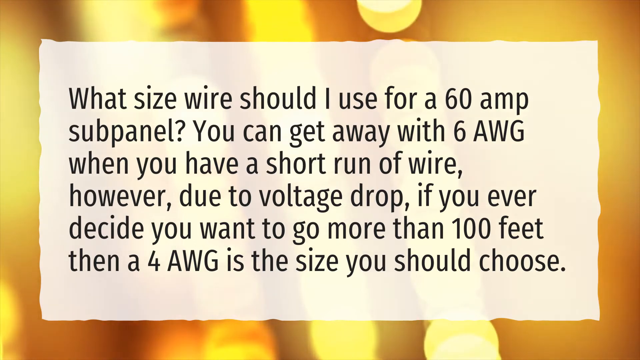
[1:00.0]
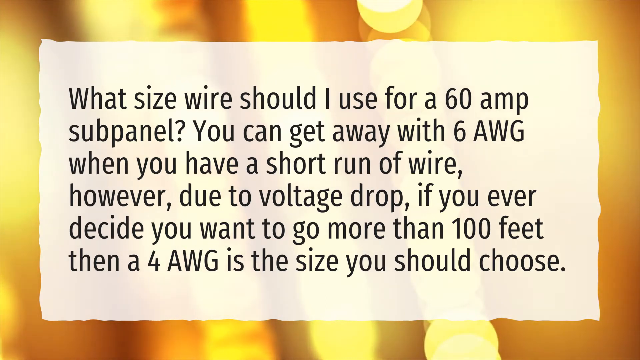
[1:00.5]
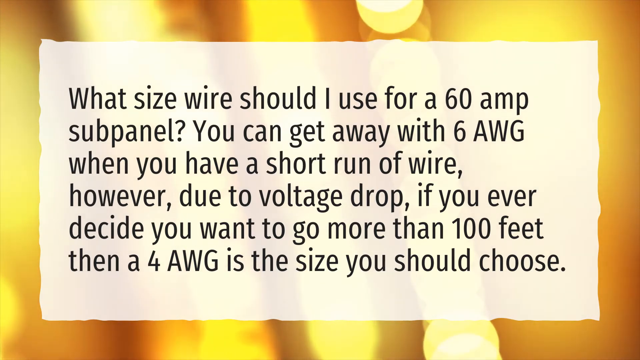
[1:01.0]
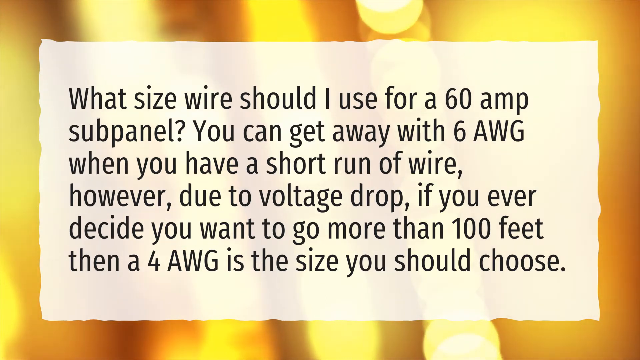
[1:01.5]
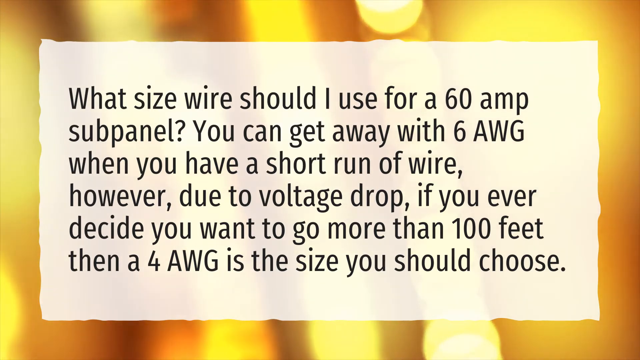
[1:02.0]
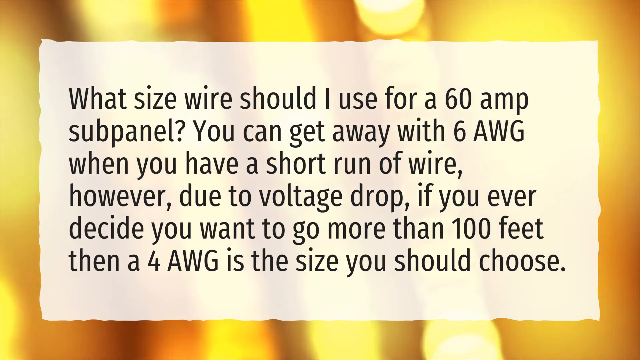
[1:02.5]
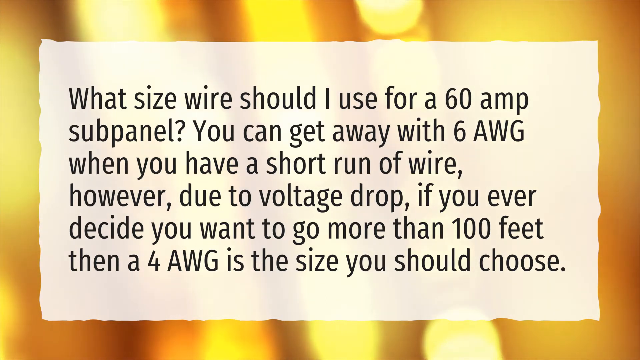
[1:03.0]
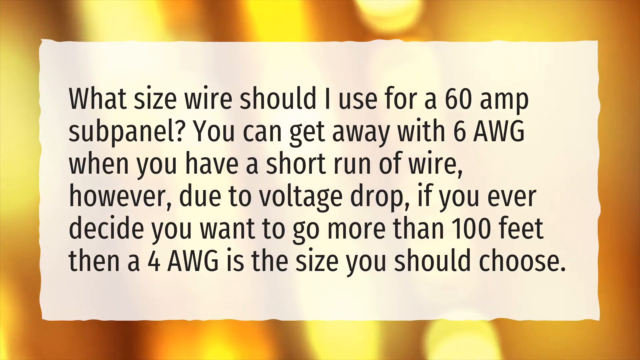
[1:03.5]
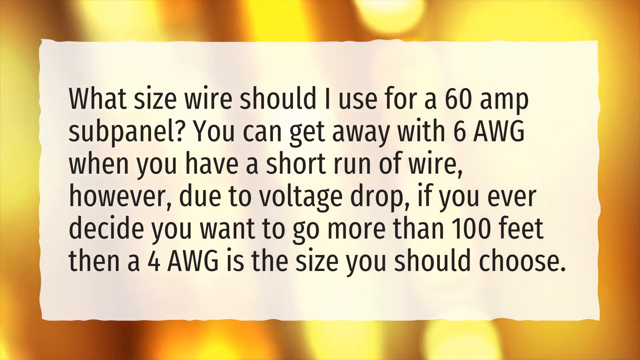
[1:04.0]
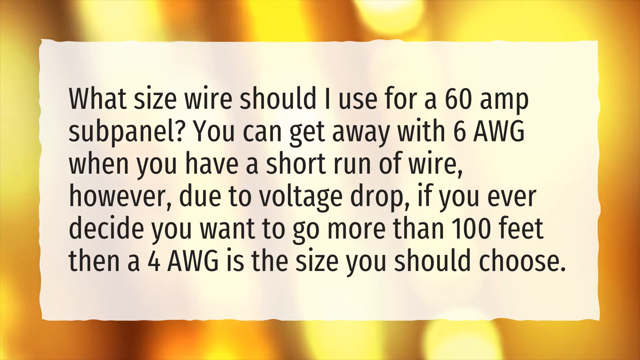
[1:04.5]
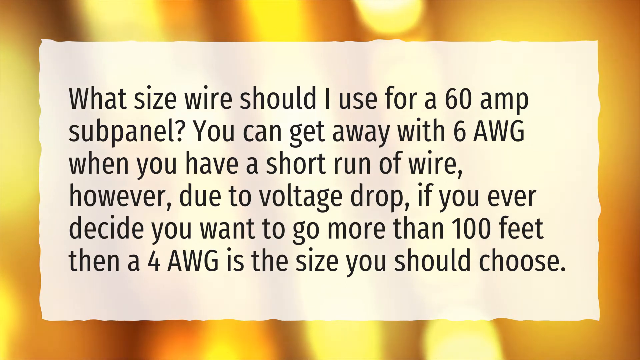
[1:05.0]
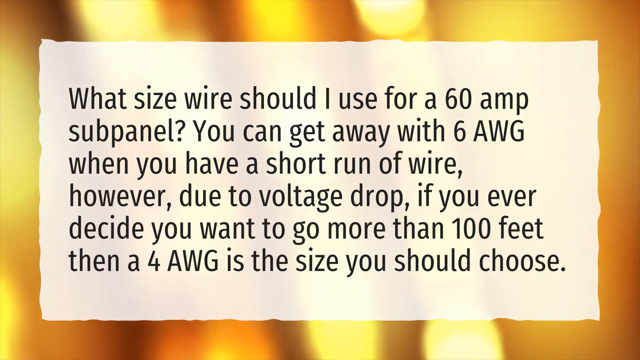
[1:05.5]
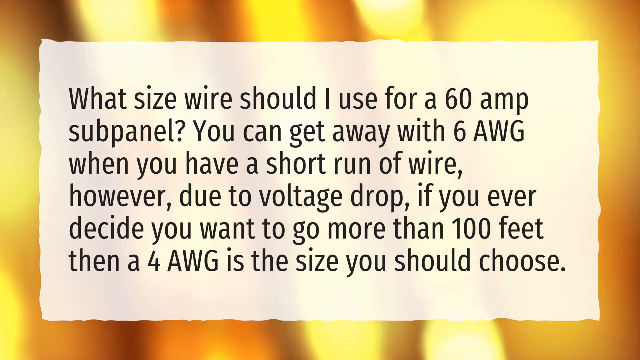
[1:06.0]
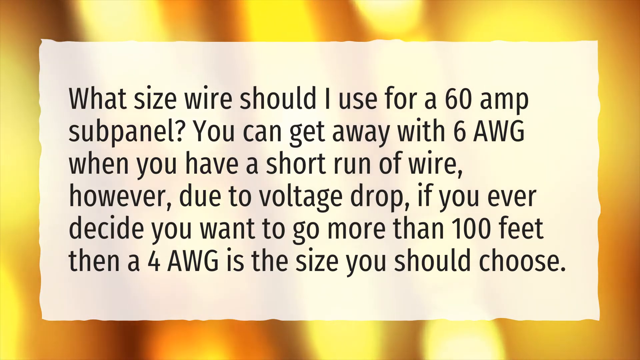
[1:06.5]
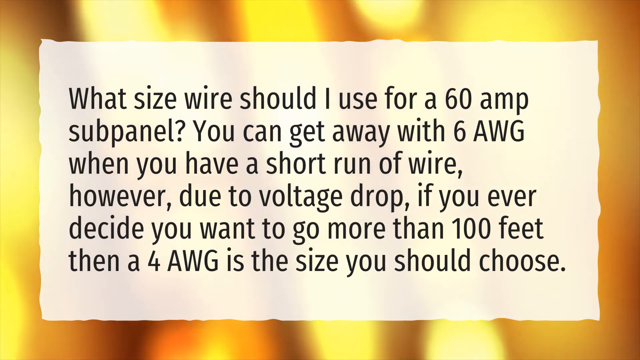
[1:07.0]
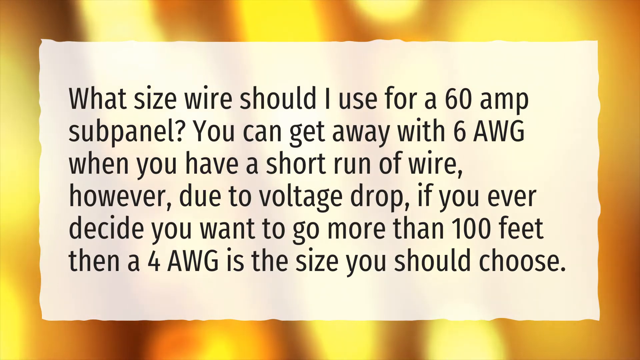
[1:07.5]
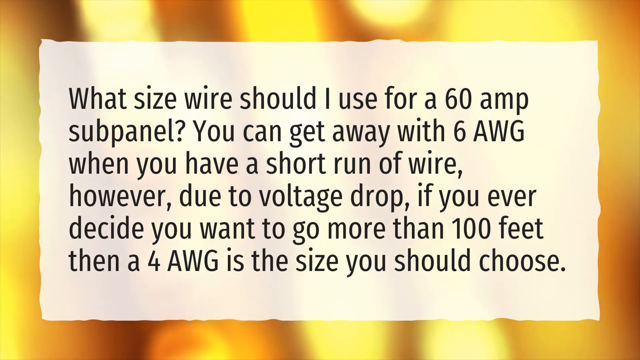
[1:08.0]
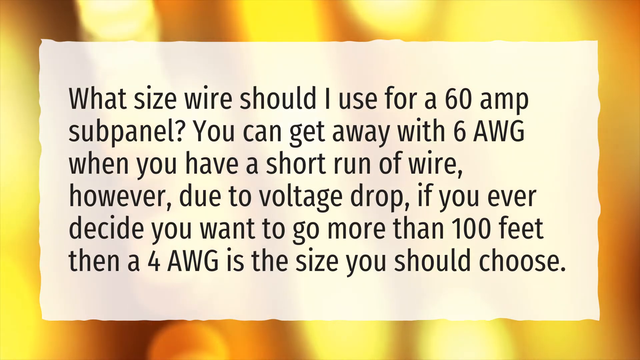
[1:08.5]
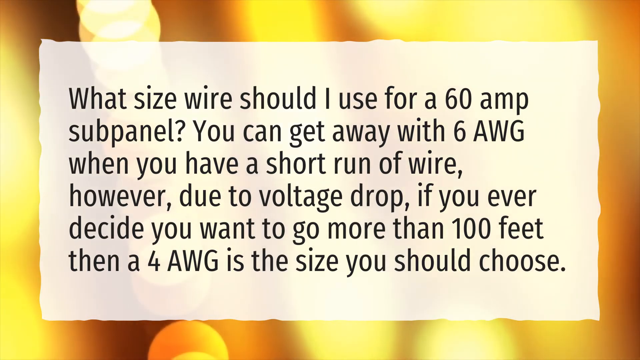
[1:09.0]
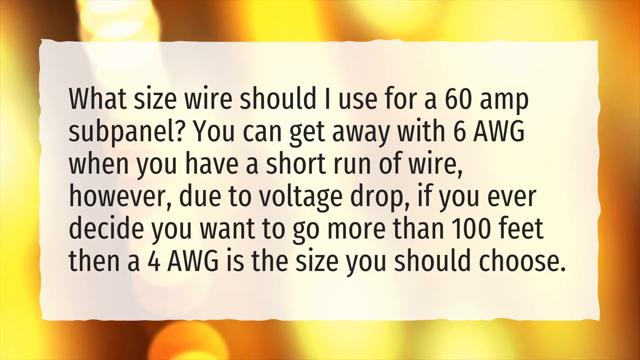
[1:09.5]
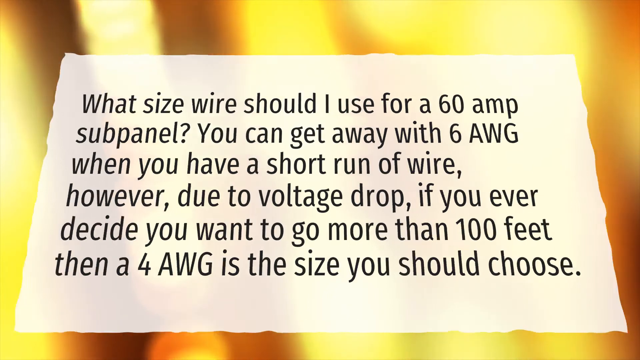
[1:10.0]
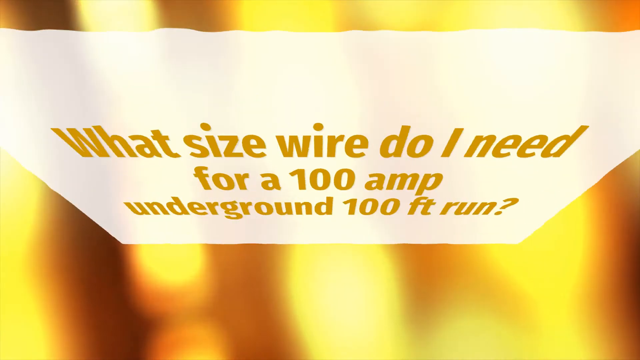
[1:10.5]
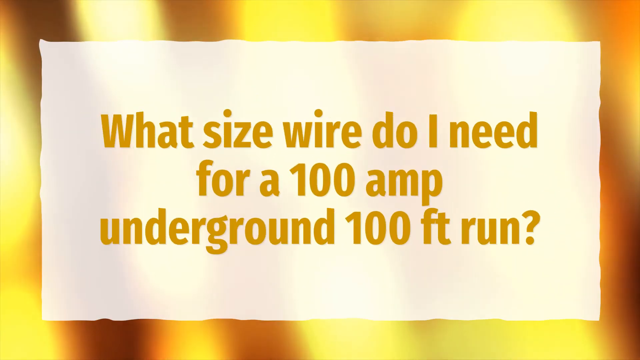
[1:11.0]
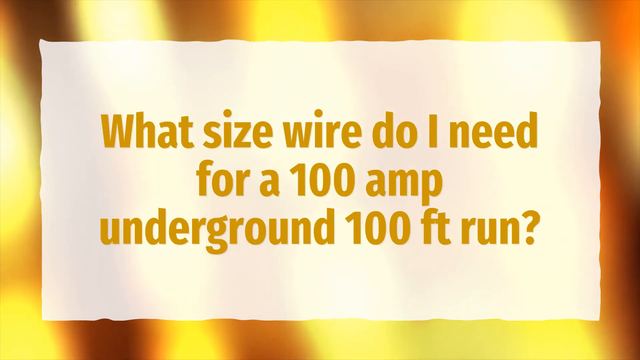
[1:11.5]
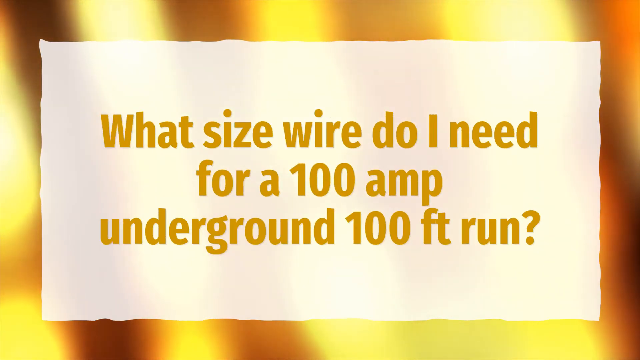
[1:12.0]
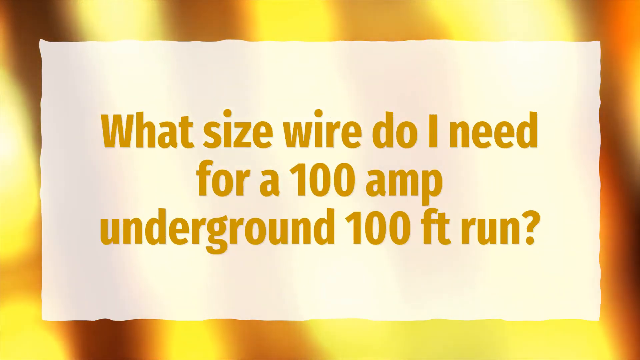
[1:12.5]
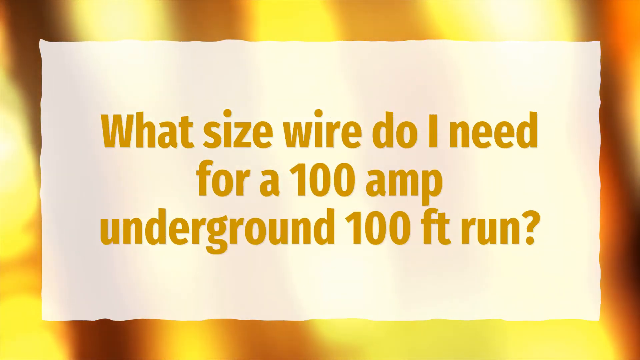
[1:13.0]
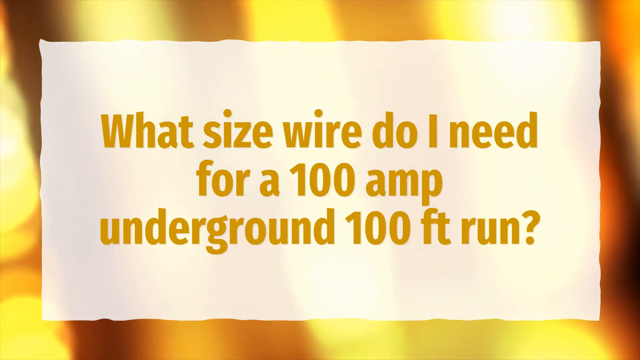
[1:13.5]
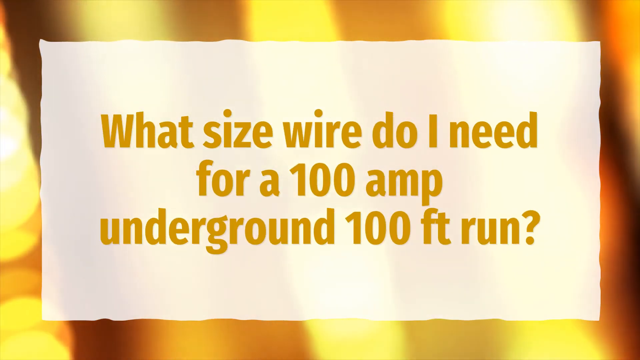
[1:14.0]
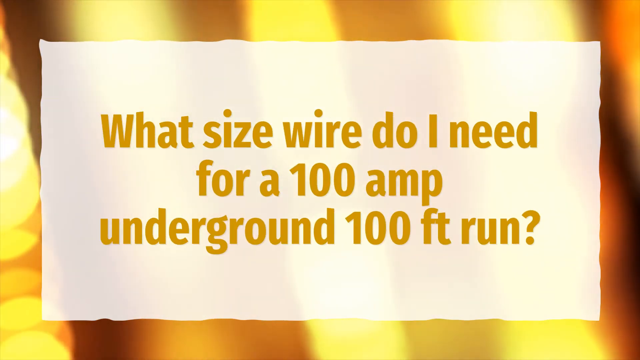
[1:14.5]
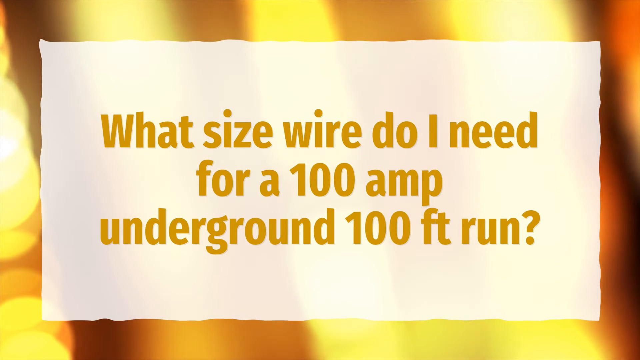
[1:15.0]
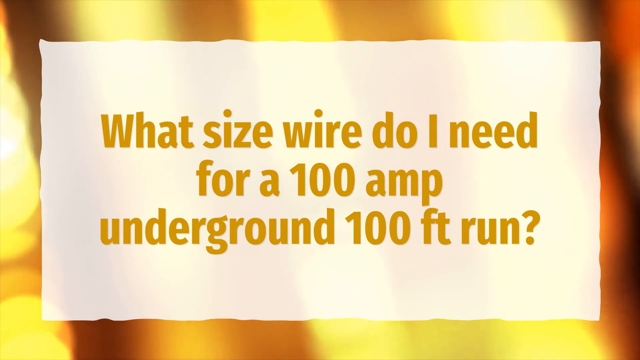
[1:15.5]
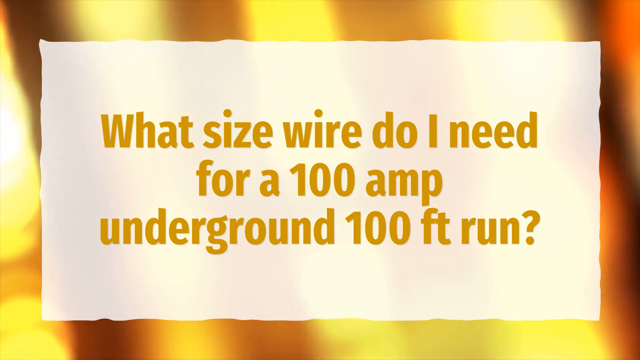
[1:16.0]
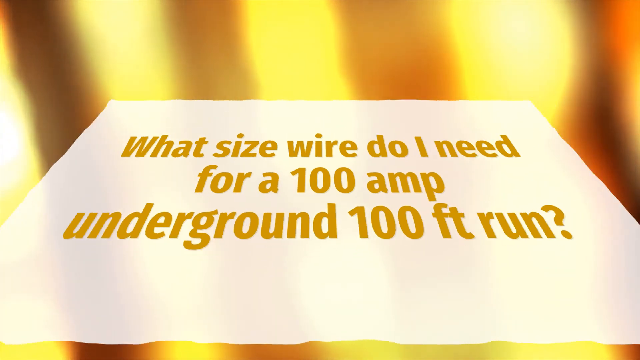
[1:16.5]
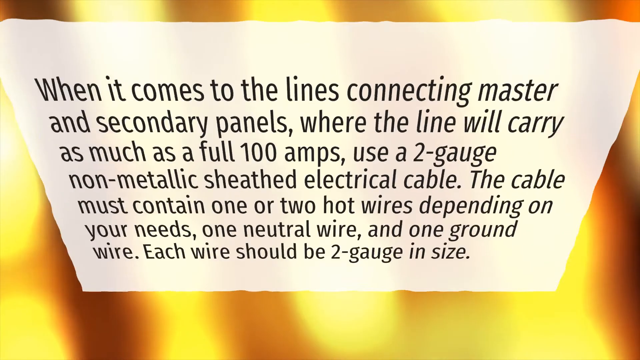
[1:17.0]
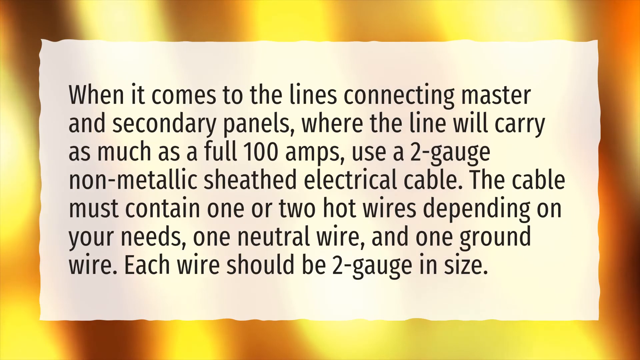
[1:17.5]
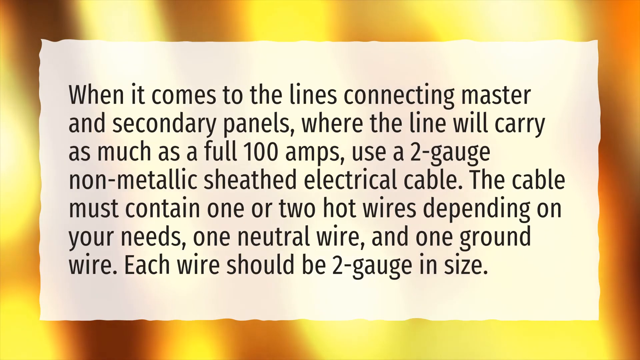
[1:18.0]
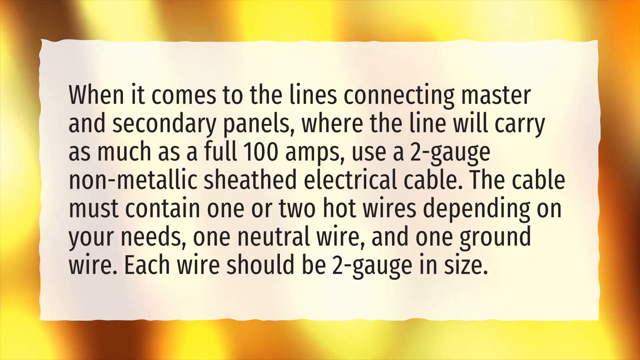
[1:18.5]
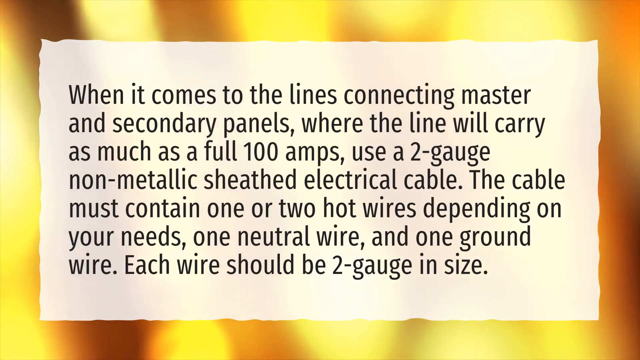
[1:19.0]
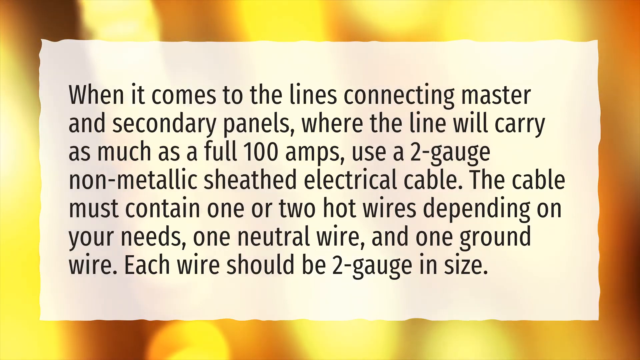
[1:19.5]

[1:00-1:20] A transparent white-looking rectangle in the middle of the frame holds a question and answer in black text, in a font that seems pretty thin. The question at the top reads "what size wire should I use for a 60 amp sub panel", followed directly by the answer: "you can get away with 6 AWG when you have a short run of wire, however, due to voltage drop, if you ever decide you want to go more than 100 feet, then a 4 AWG is the size you should choose." Nothing else is written in that area. A yellow light pulsates in the background as the page holds a little longer. The question then changes to "what size wire do I need for a 100 amp underground 100 feet run", written in a sort of mustard-orange color. It stays on the page before flipping again to a new question-and-answer area.